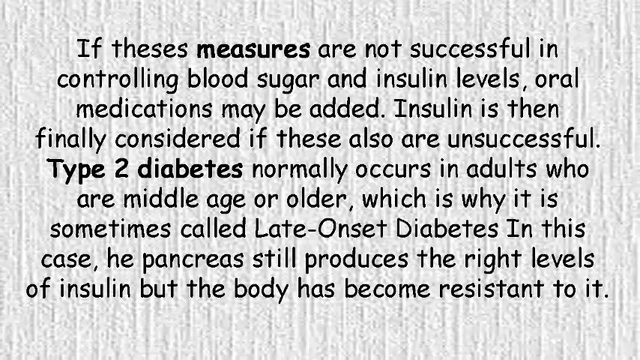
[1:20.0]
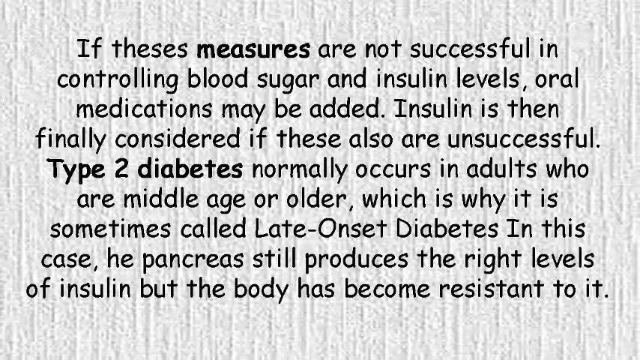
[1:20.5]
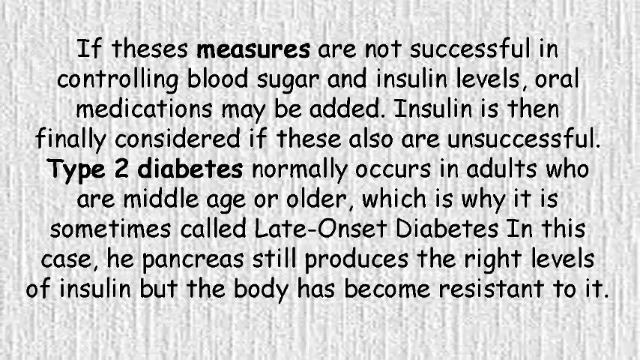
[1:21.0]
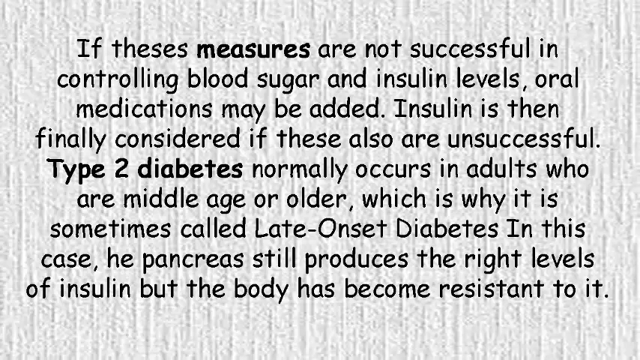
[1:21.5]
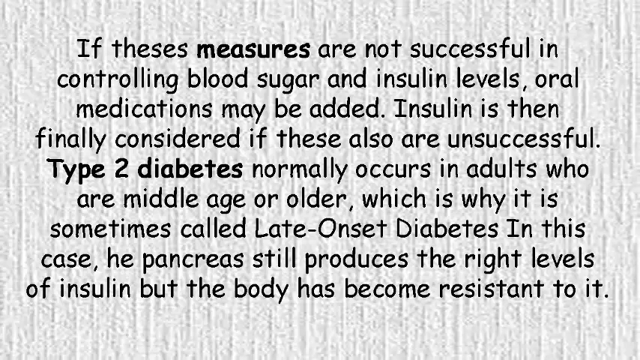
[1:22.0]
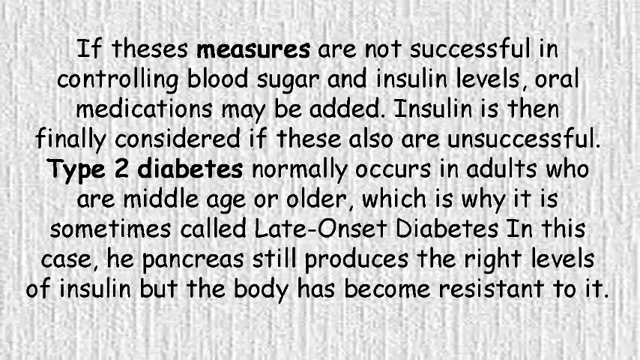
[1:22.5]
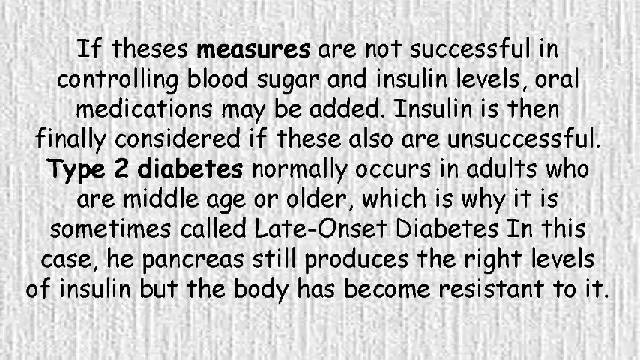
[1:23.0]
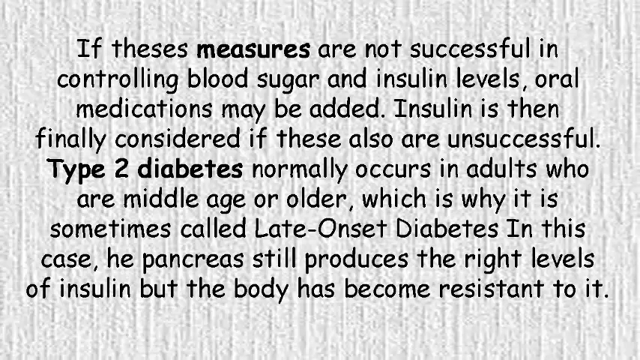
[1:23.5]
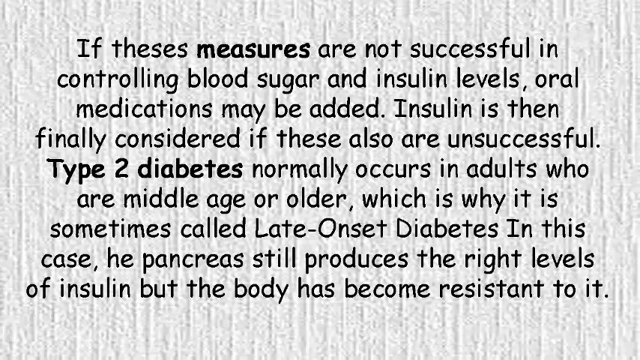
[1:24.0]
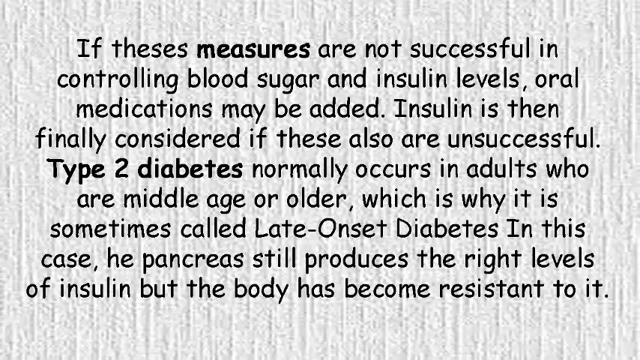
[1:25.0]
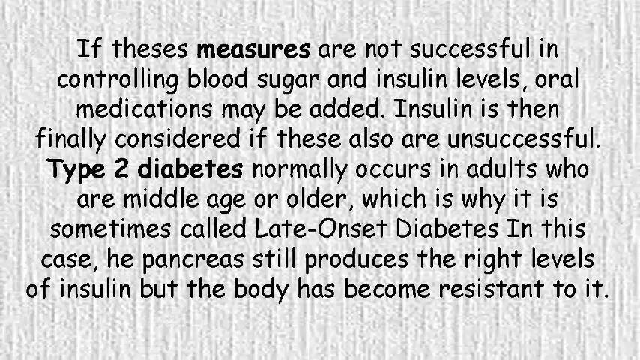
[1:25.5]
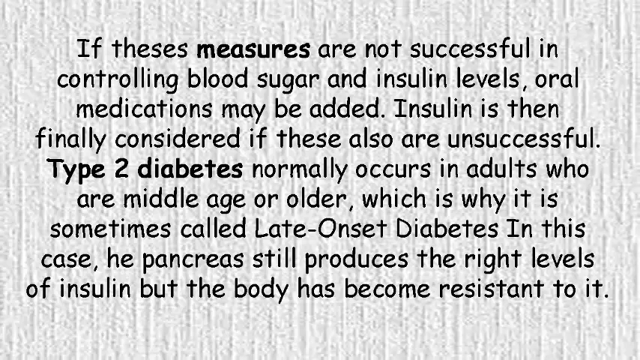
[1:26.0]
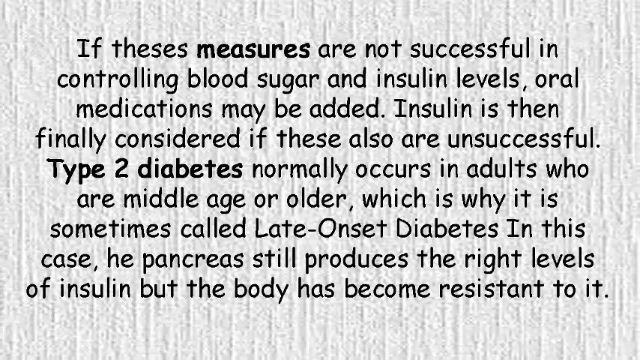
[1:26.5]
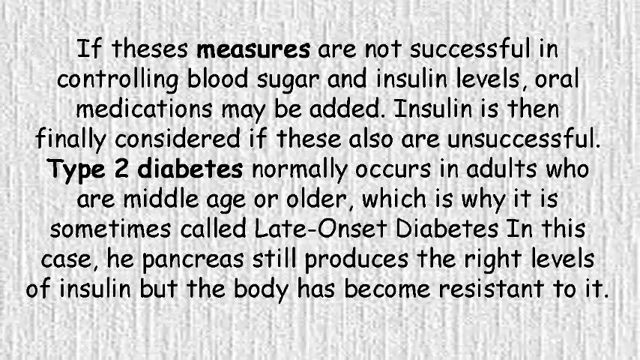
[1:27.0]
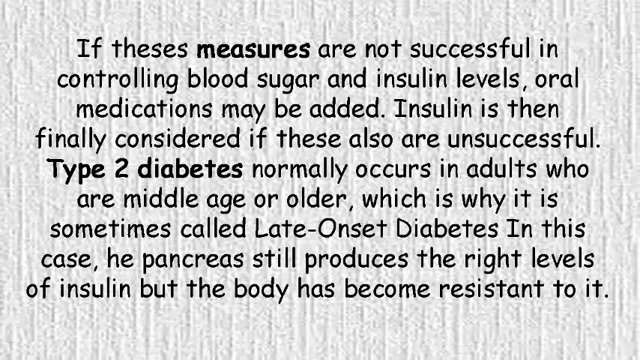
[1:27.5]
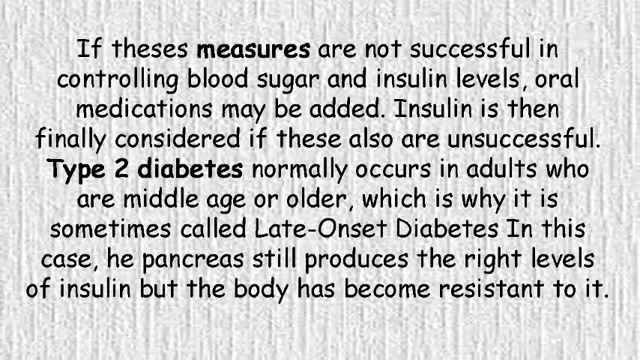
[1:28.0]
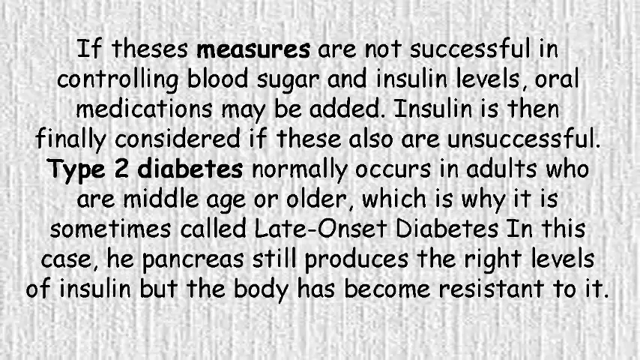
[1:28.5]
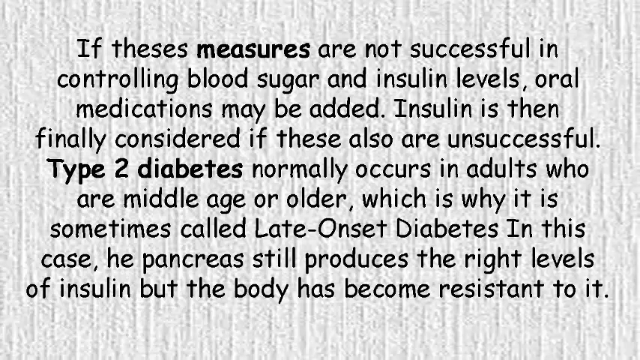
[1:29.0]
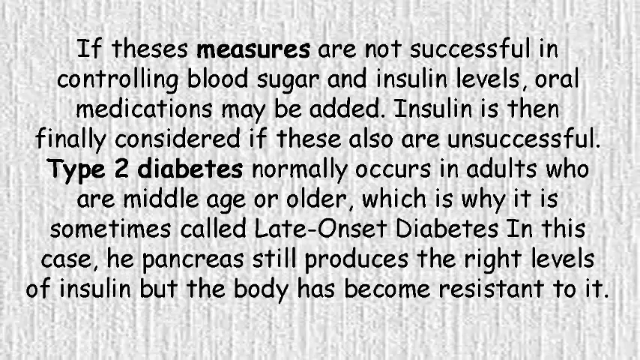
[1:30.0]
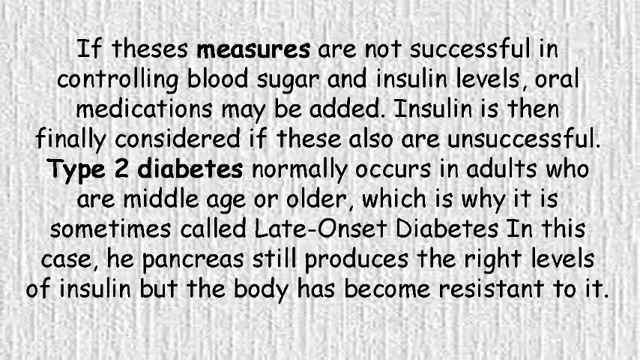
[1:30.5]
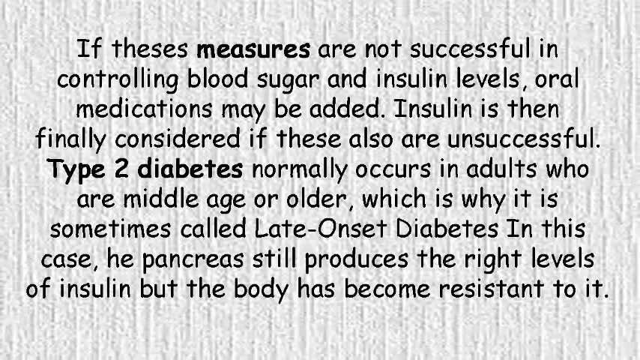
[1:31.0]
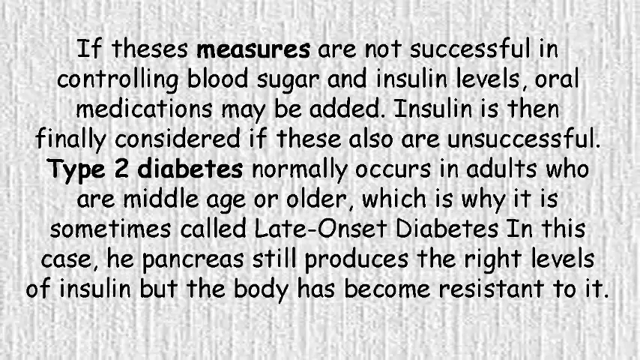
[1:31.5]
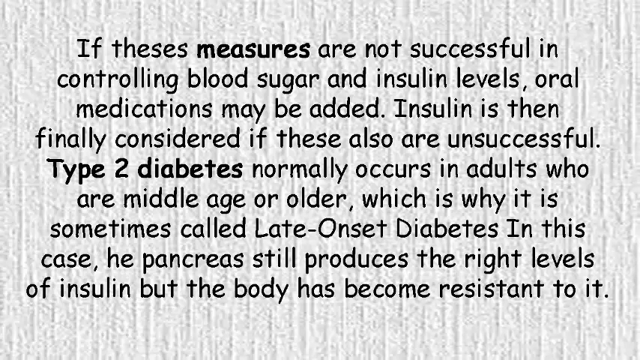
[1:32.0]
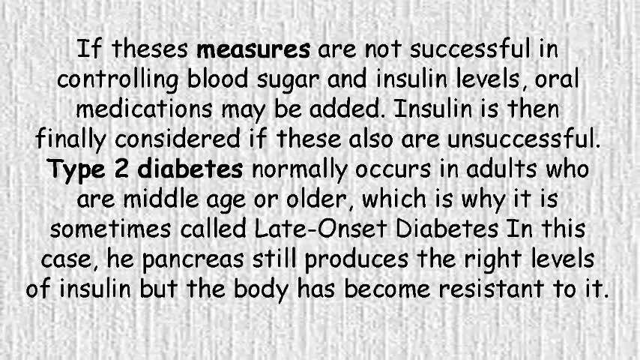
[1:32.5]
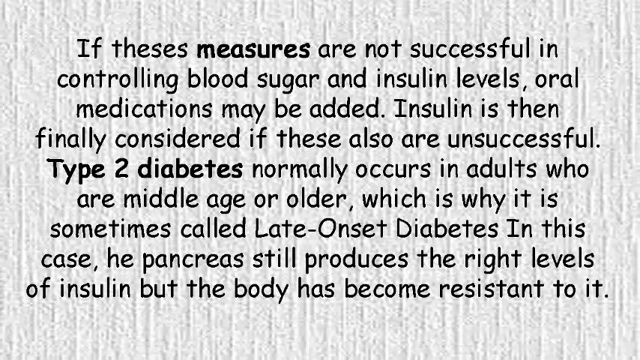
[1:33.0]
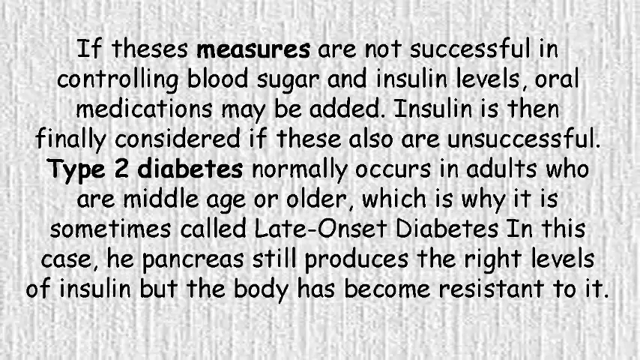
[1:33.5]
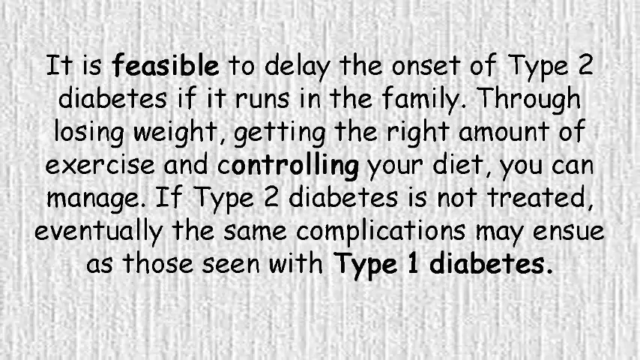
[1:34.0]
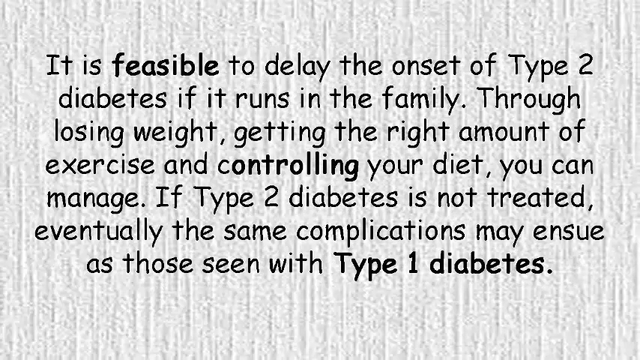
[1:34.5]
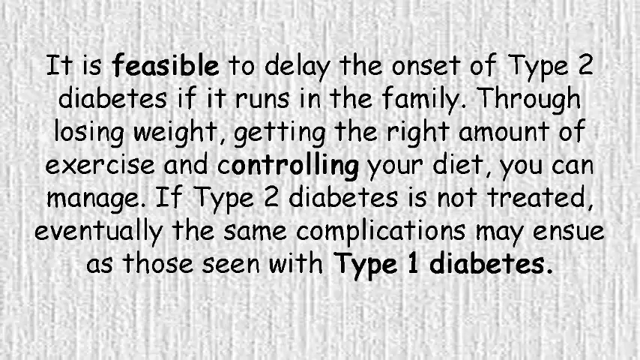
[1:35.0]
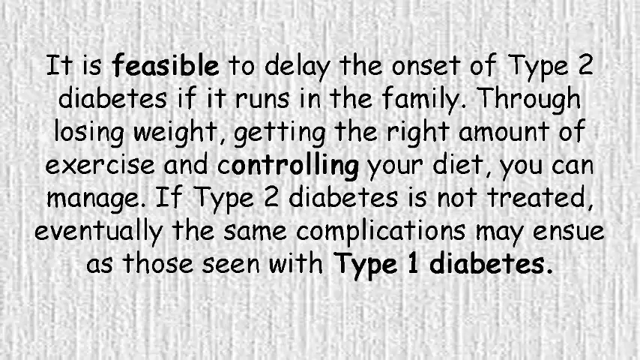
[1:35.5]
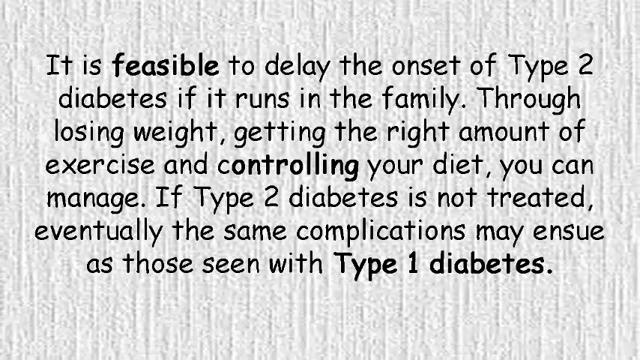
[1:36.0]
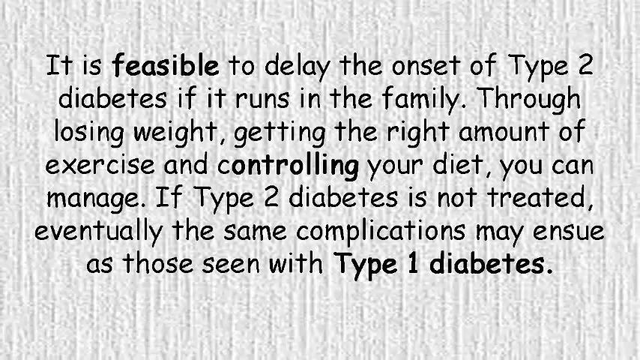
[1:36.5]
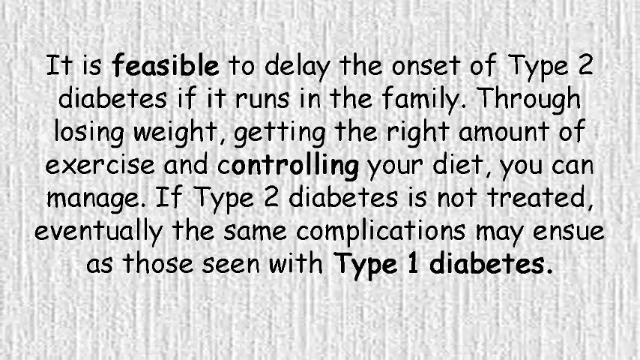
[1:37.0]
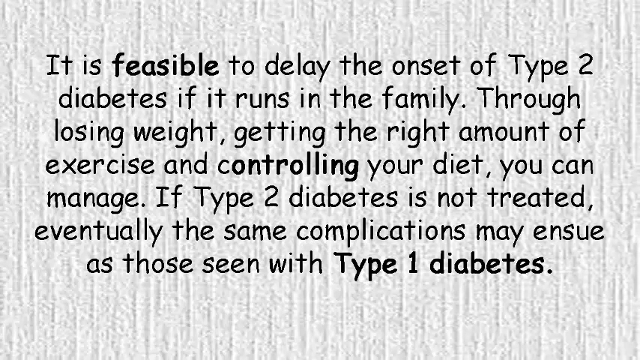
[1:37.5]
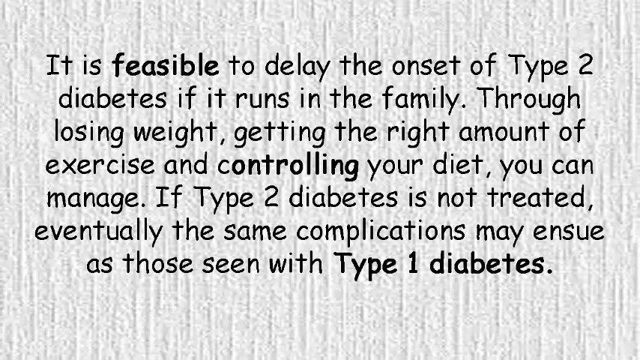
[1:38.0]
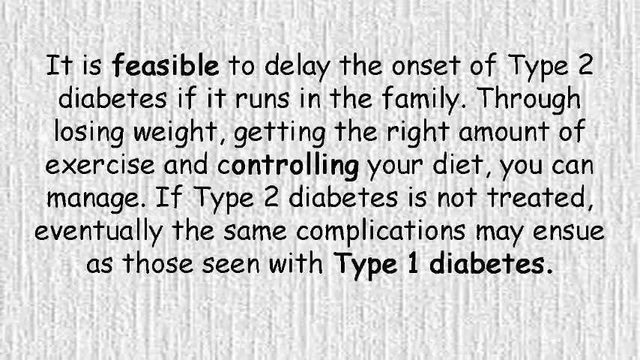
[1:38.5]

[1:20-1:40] A paragraph reads: "If these measures are not successful in controlling blood sugar and insulin levels oral medication may be added insulin is then finally considered if these are also are unsuccessful type 2 diabetes normally occurs in adult to our middle age or older which is why it is sometimes called late onset diabetes and in this case the pancreas still produces the right levels of insulin but the body has become resistant to it." There is a typo where "the pancreas" should appear: it actually says "he pancreas", with the t missing. The paragraph then switches to a new one: "It is feasible to delay the onset of type 2 diabetes if it runs in the family. Through losing weight, getting the right amount of exercise, and controlling your diet, you can manage. If type 2 diabetes is not treated, eventually the same complications may ensue as those seen with type 1 diabetes."